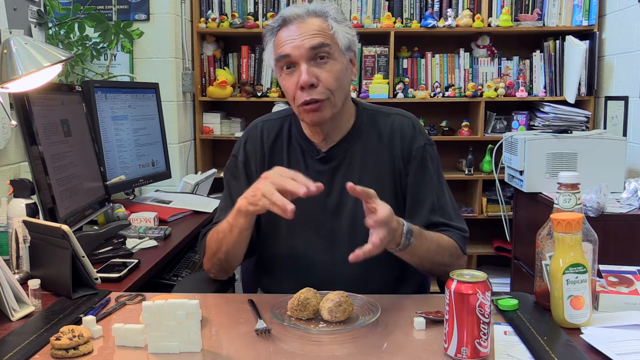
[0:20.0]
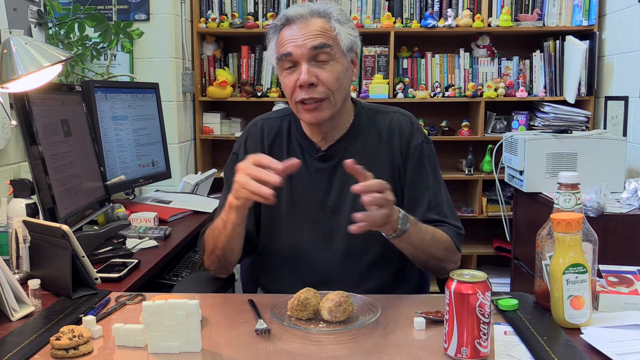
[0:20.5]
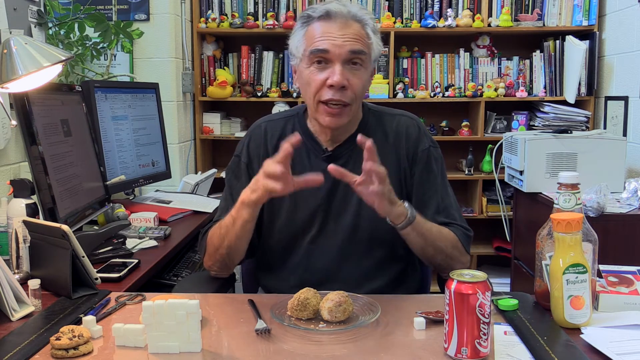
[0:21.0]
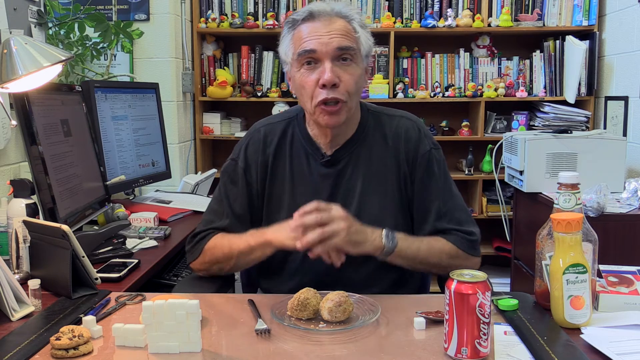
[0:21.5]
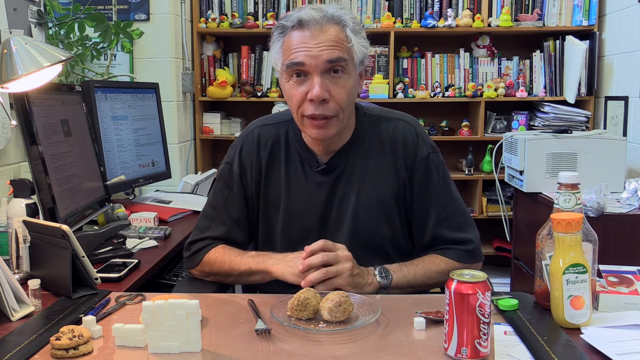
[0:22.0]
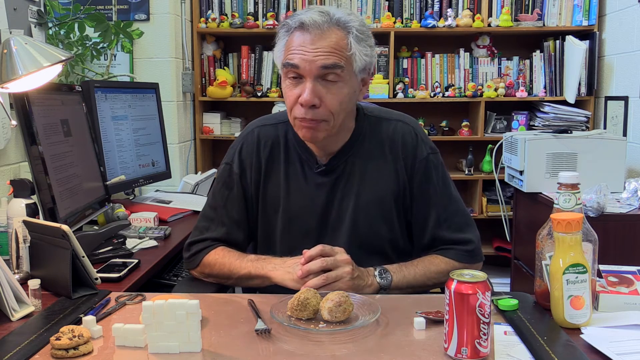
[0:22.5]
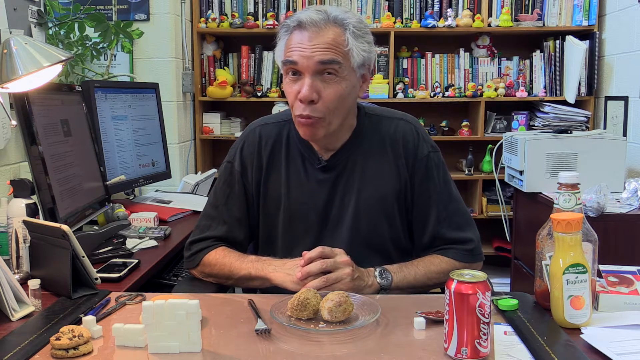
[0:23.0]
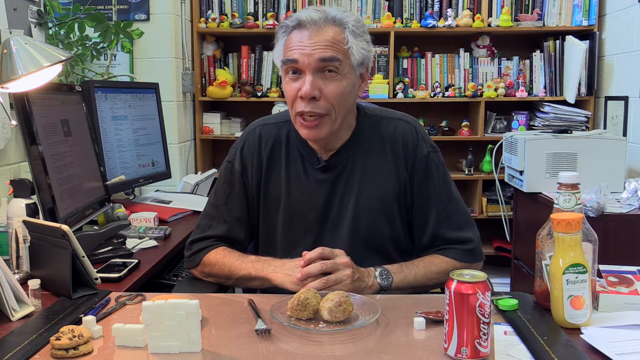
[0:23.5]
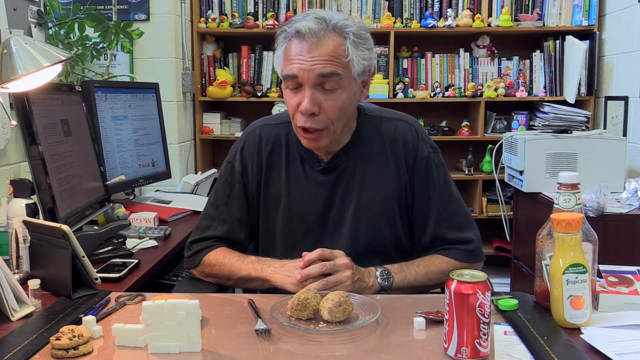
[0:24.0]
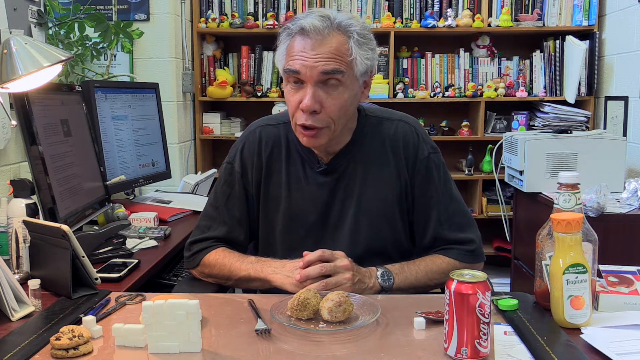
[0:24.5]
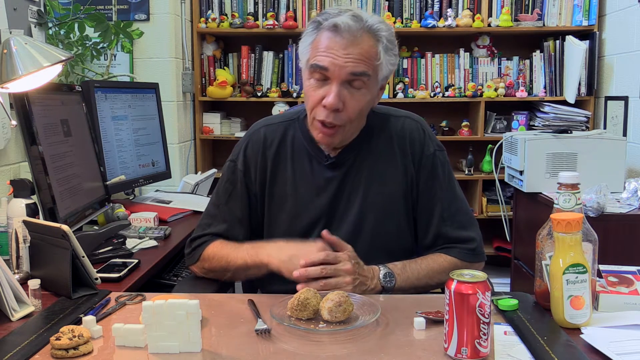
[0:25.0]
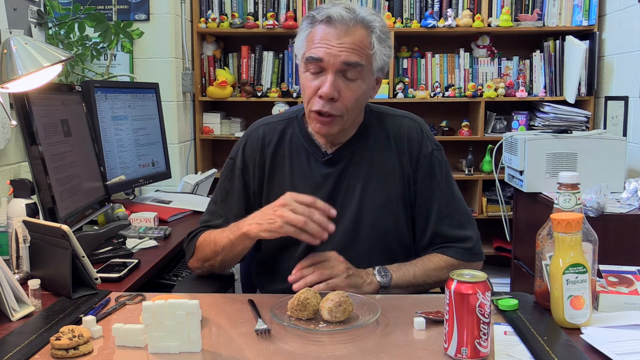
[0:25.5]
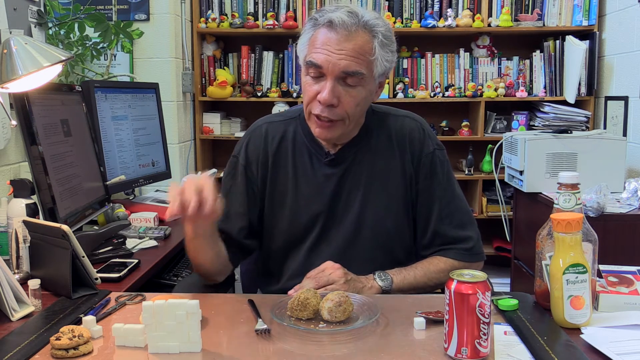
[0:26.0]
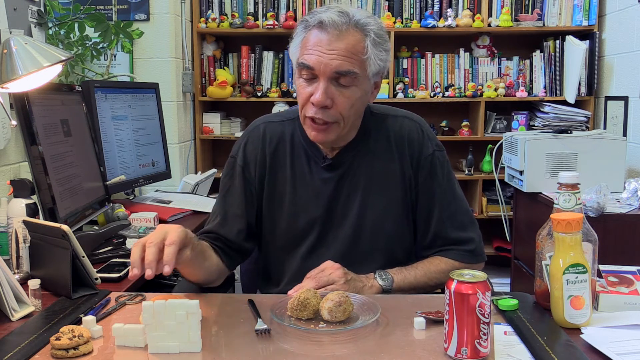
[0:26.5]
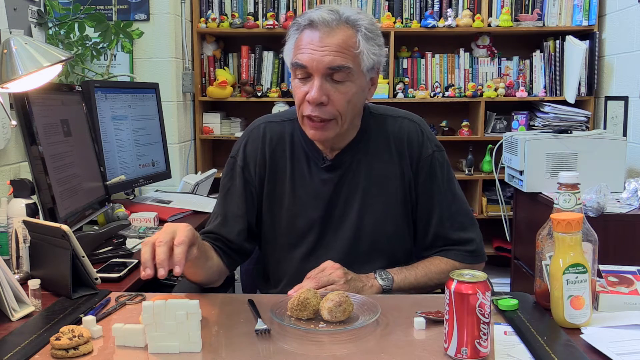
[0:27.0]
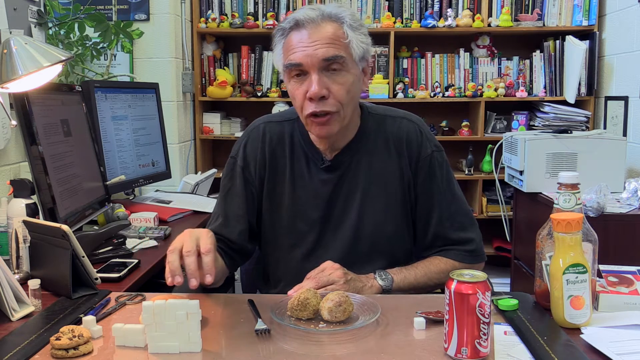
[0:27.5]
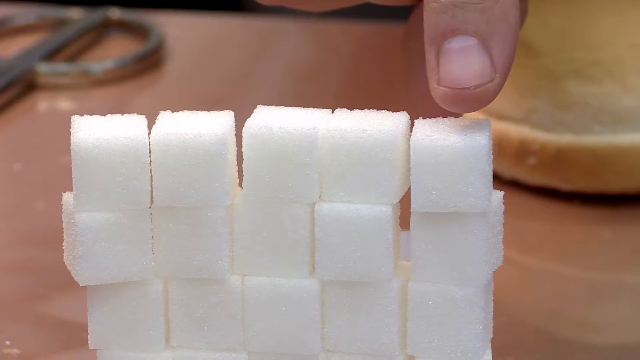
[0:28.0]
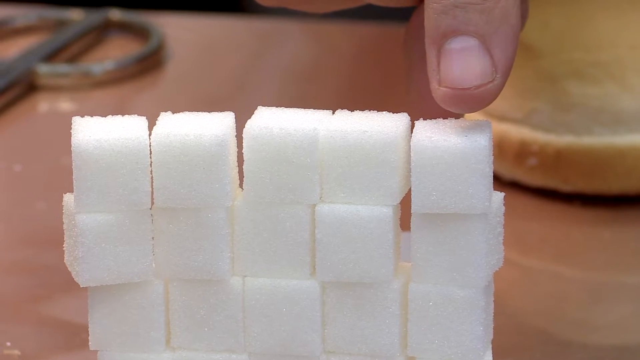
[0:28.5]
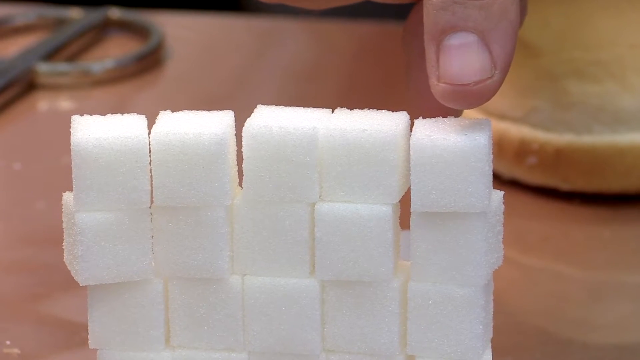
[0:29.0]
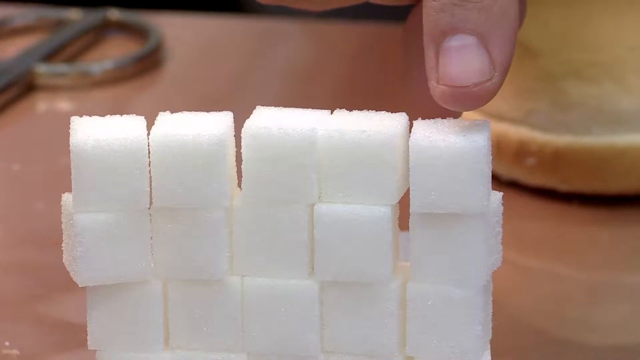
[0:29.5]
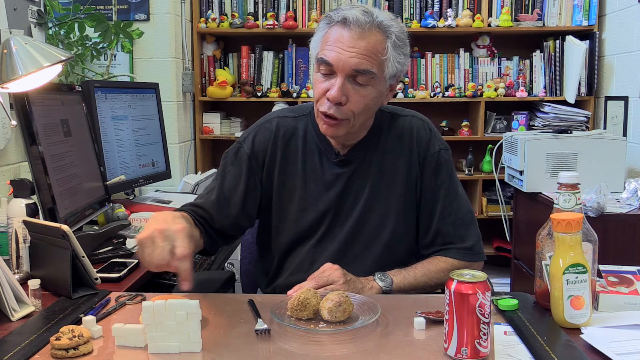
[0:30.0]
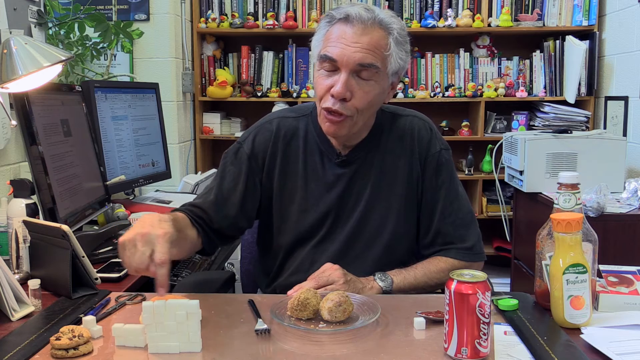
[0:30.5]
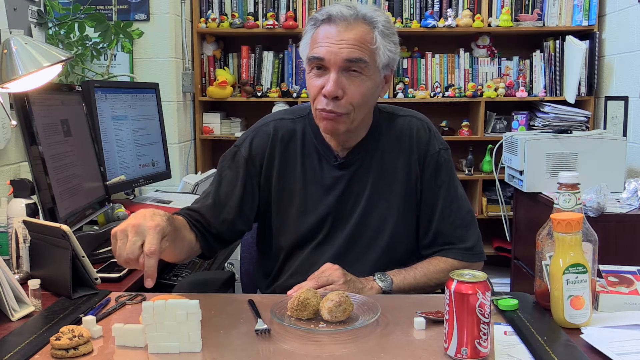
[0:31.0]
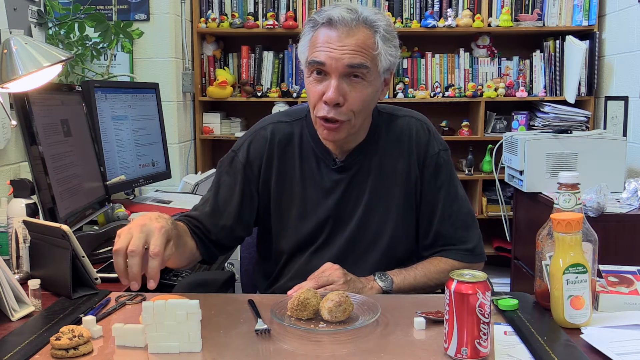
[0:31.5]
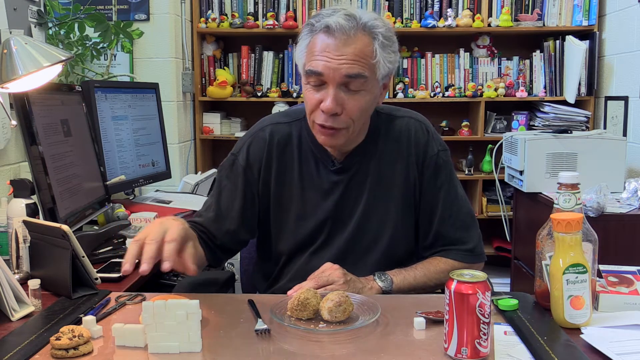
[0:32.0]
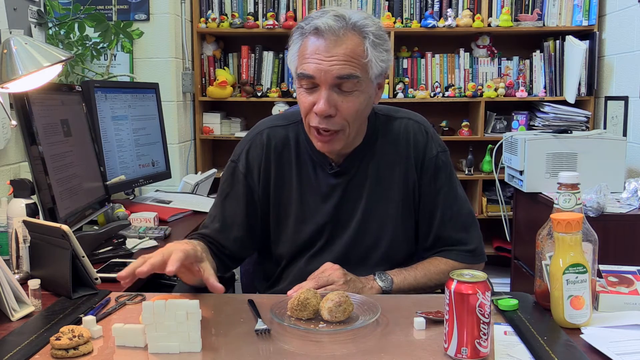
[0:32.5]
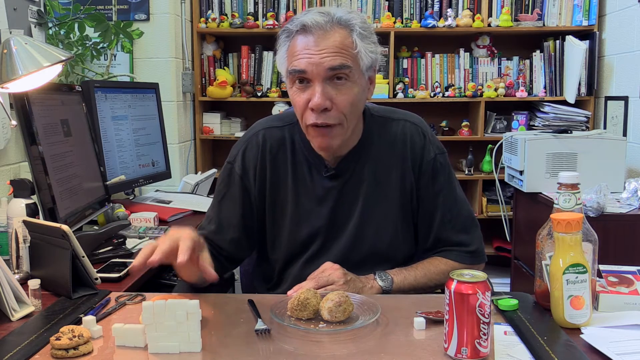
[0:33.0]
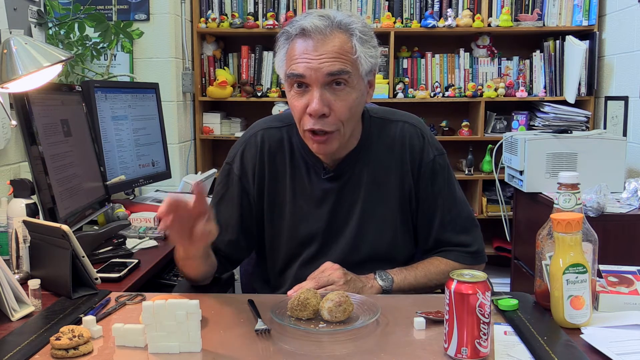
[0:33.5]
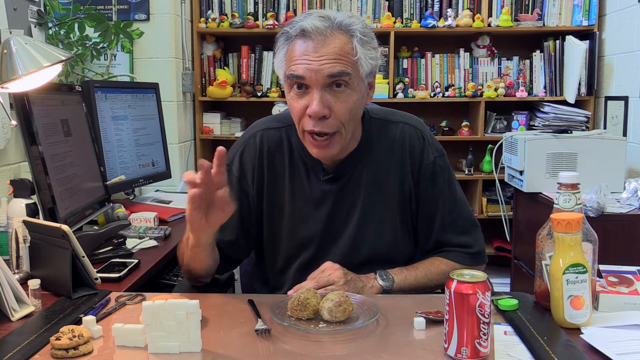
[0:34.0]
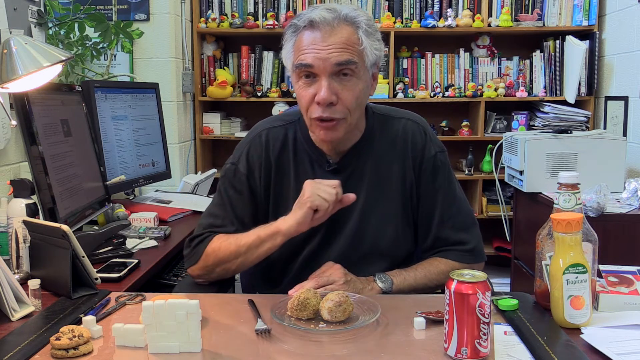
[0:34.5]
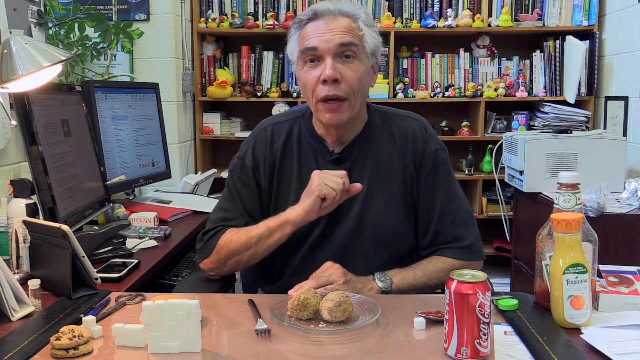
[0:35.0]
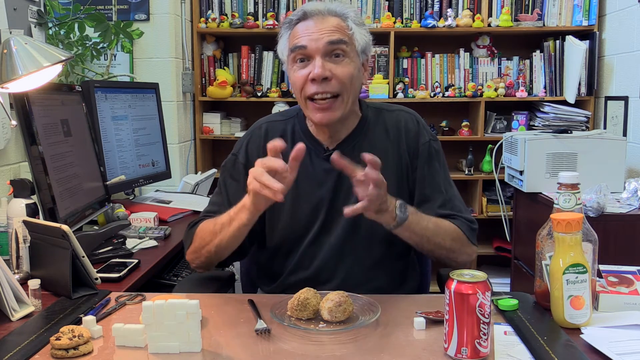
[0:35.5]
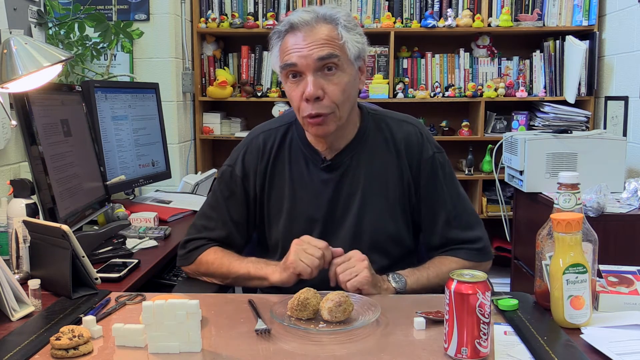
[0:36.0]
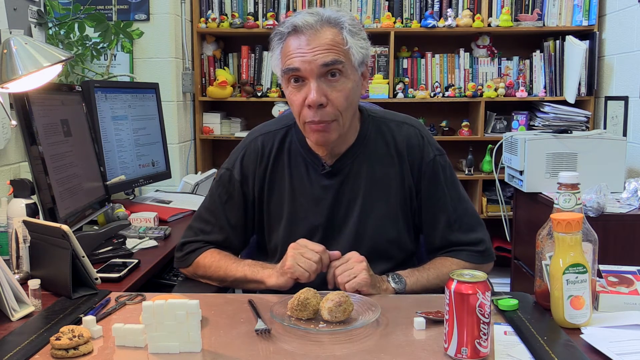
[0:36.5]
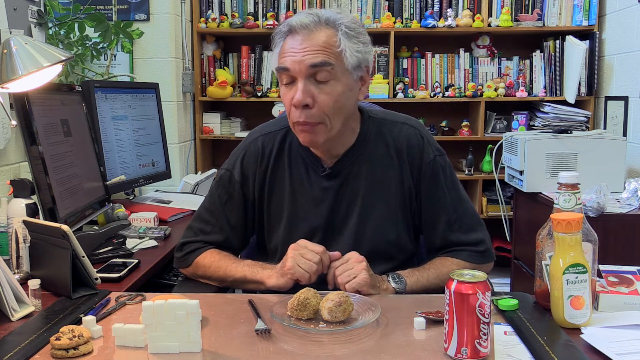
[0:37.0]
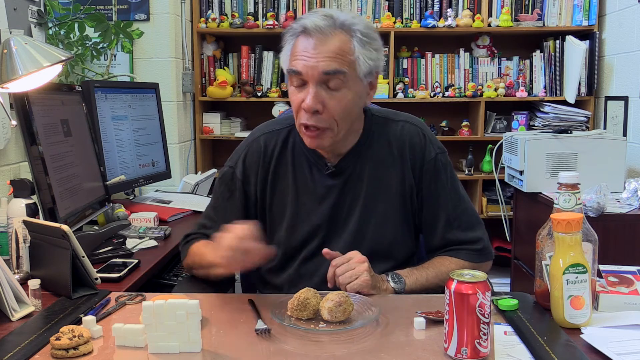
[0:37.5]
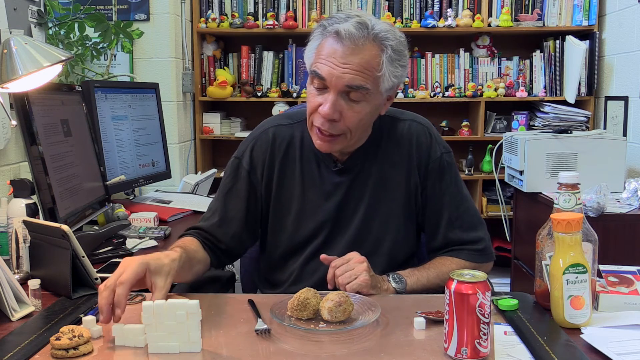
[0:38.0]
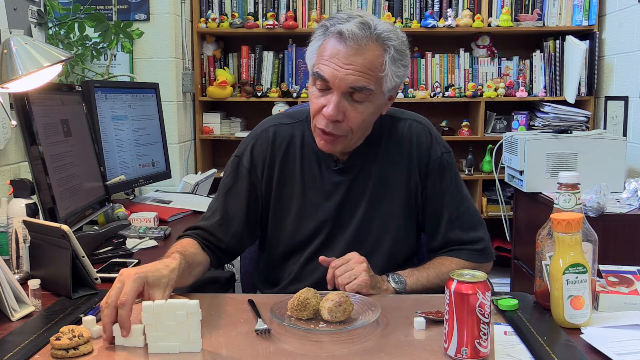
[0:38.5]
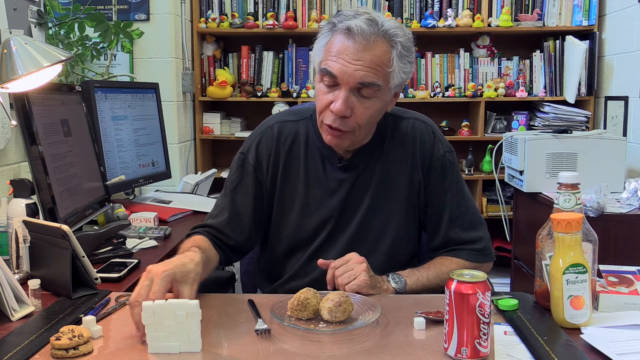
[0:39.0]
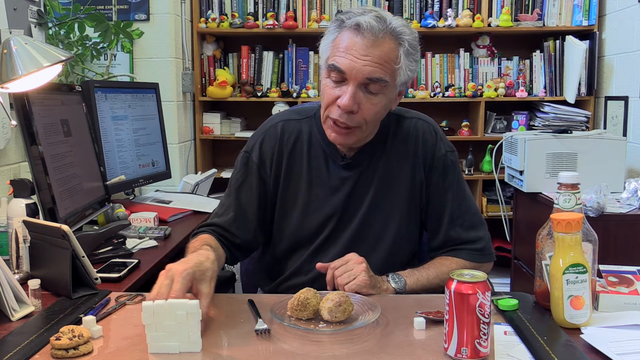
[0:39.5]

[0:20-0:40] The man gestures descriptively with his hands. He has gray and black hair. The bookshelf behind him holds several plastic ducks, like toys or rubber duckies for a tub. The office has two computer screens, a cell phone, what appears to be a tablet on a stand, a light over one part of the desk, and a printer in the background, with several papers shoved into the shelf behind him and some pictures on the wall. It appears to be a very small area, with cabinets on the floor to his right. There is some used ketchup that is almost empty, an unopened bottle of Tropicana orange juice, and a Coca-Cola can that appears to be unopened. In front of him are two balls of some type of food on a clear plate, with a fork beside him. He talks with lots of hand gestures, looking directly at the screen, and points down with his fingers toward what appears to be a stack of sugar cubes. He picks up something and moves it behind the sugar cubes, but what it is cannot be seen.